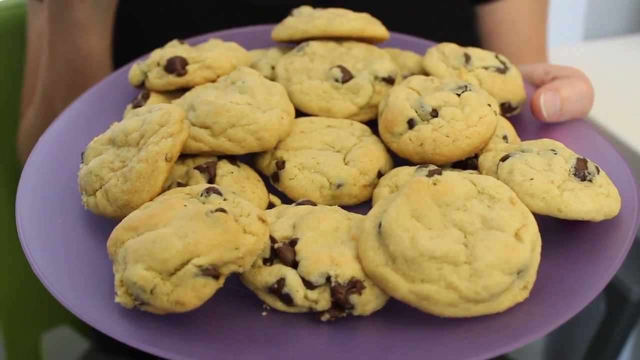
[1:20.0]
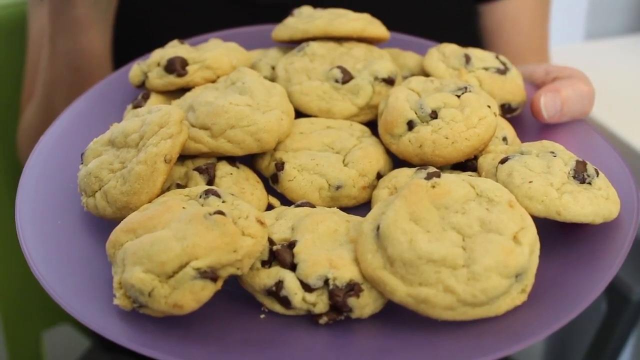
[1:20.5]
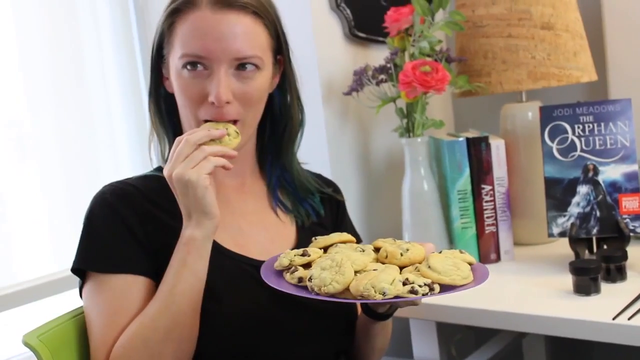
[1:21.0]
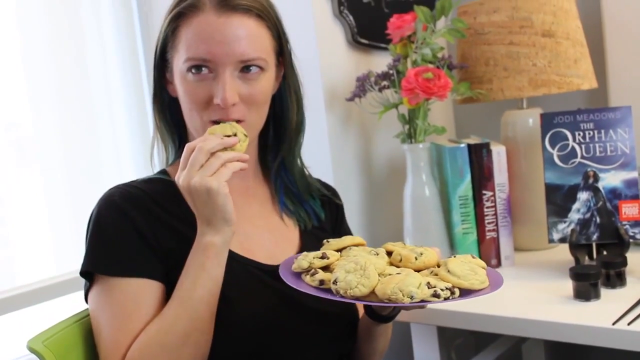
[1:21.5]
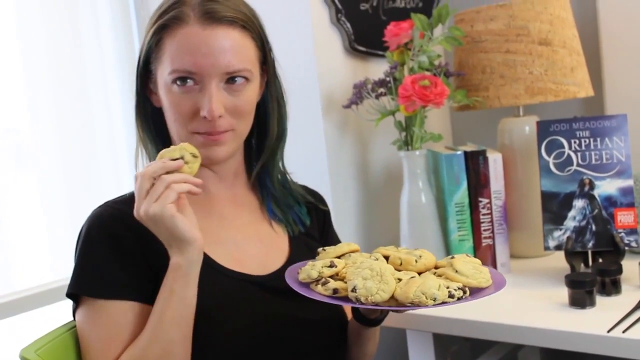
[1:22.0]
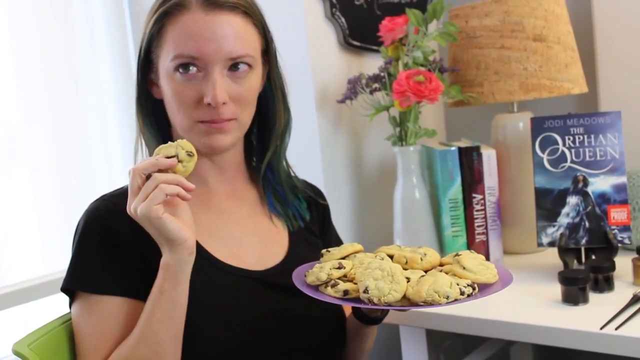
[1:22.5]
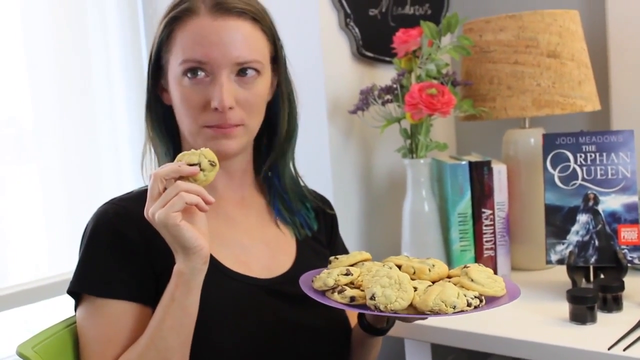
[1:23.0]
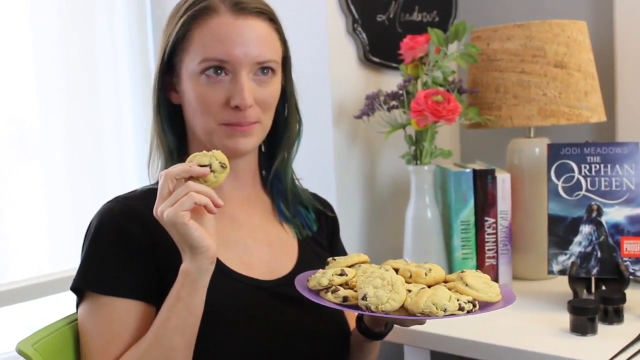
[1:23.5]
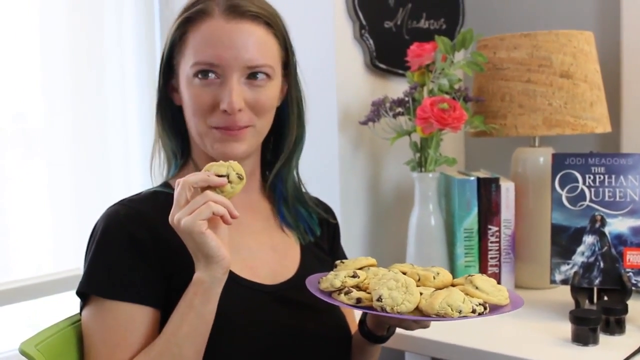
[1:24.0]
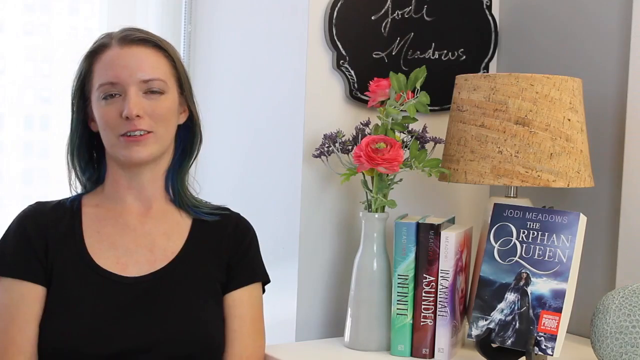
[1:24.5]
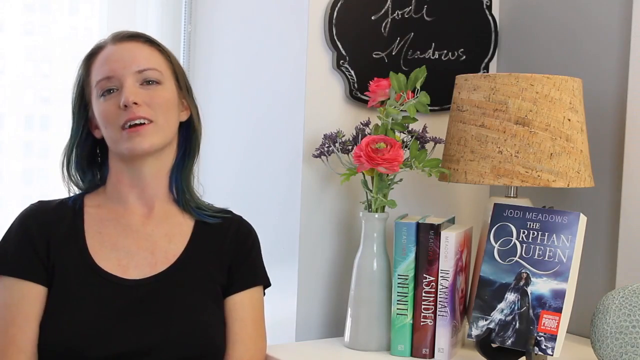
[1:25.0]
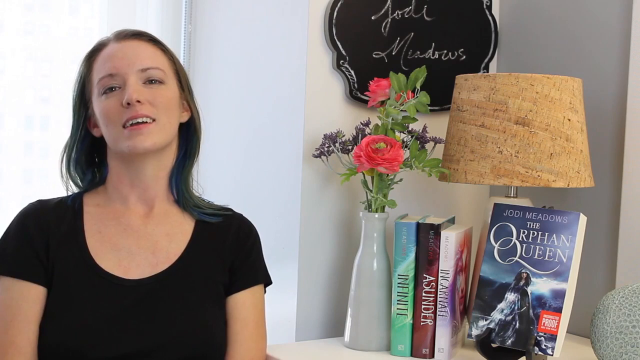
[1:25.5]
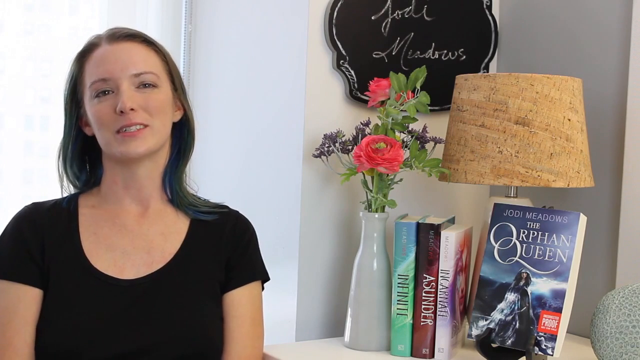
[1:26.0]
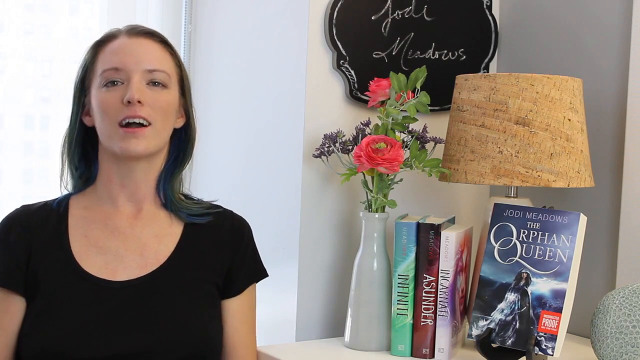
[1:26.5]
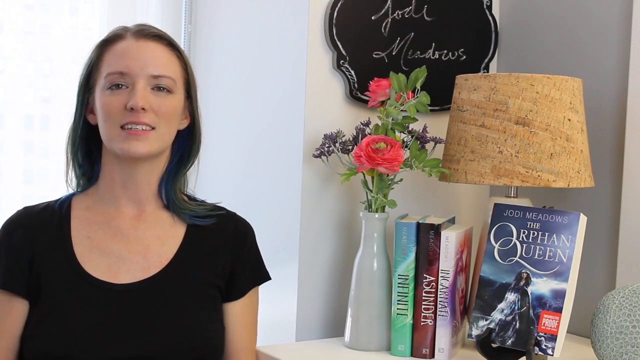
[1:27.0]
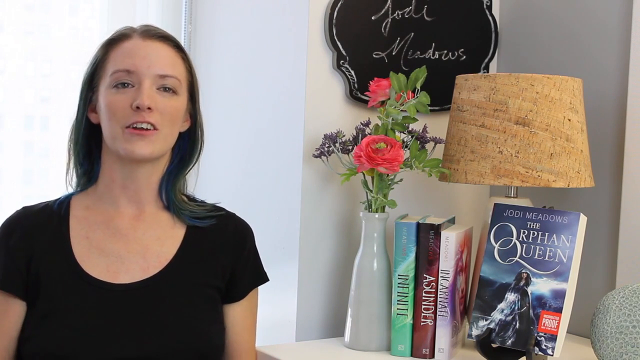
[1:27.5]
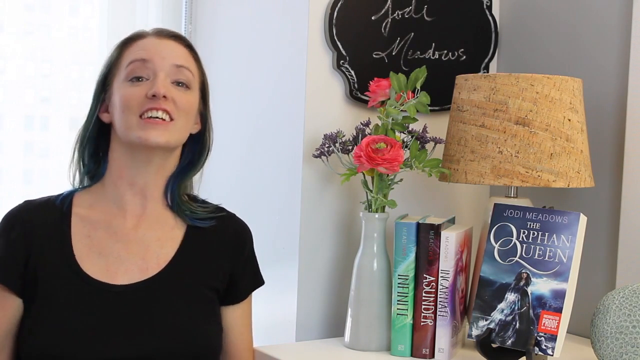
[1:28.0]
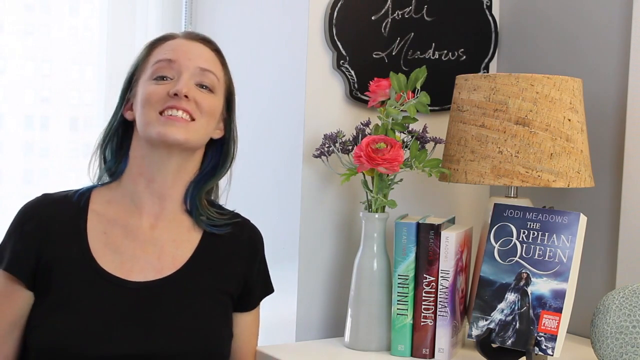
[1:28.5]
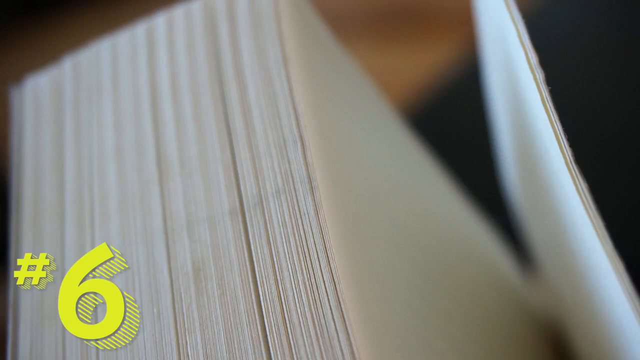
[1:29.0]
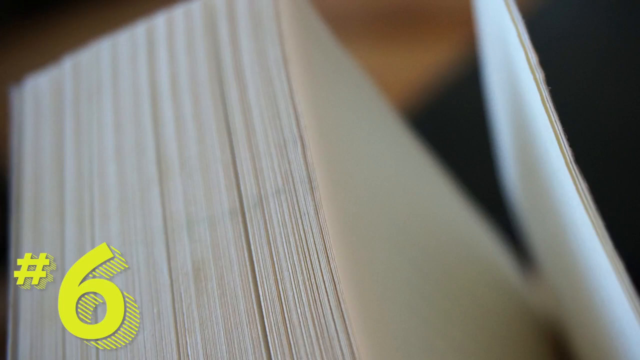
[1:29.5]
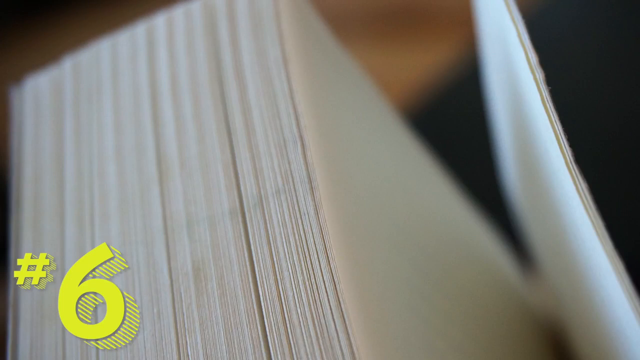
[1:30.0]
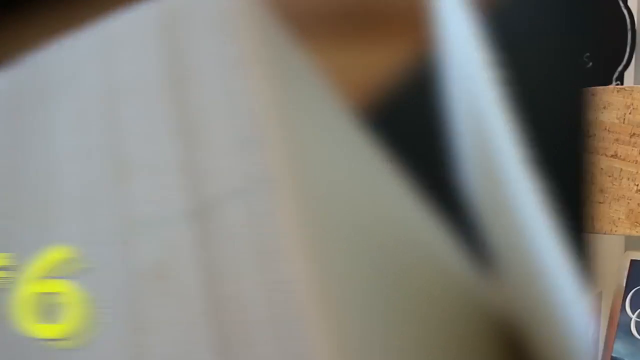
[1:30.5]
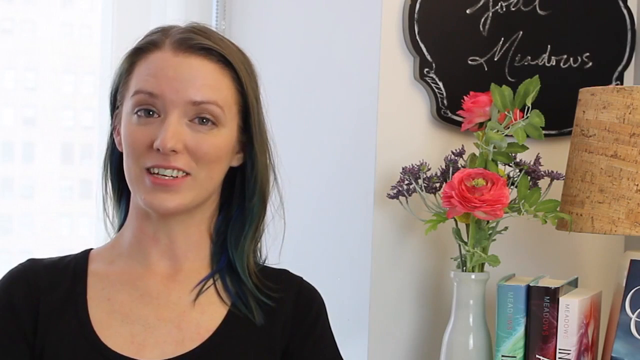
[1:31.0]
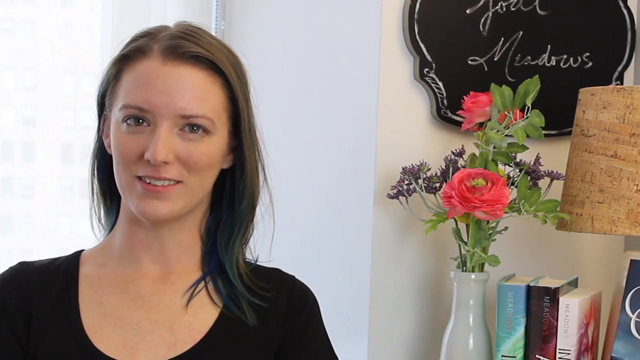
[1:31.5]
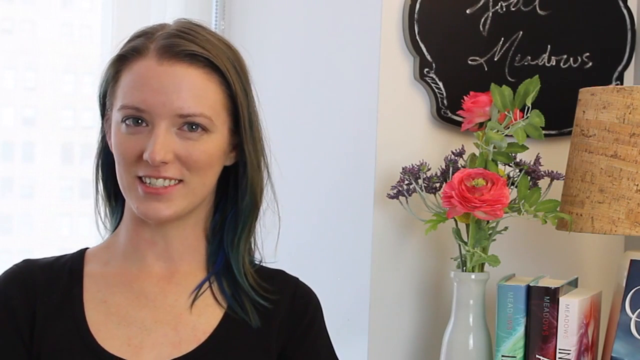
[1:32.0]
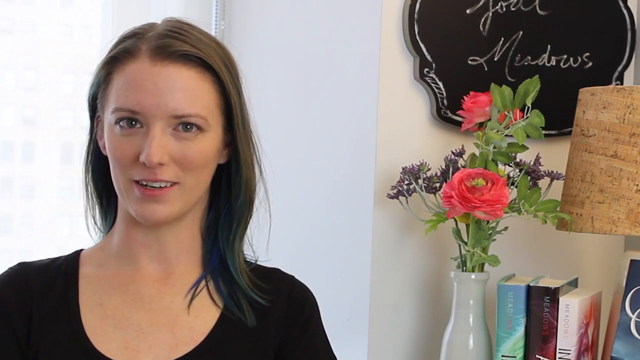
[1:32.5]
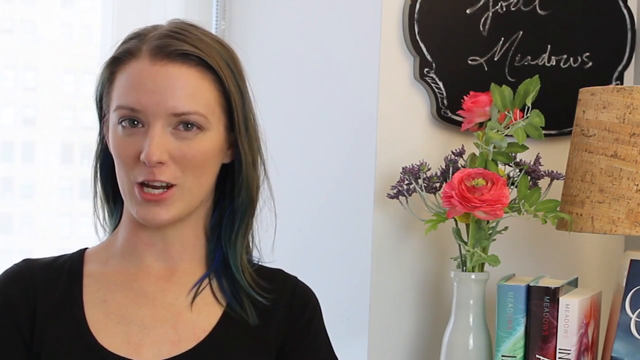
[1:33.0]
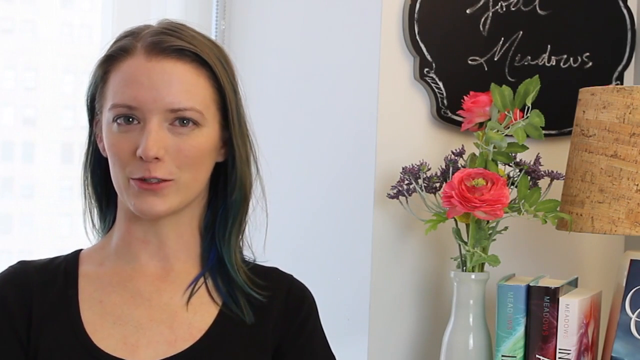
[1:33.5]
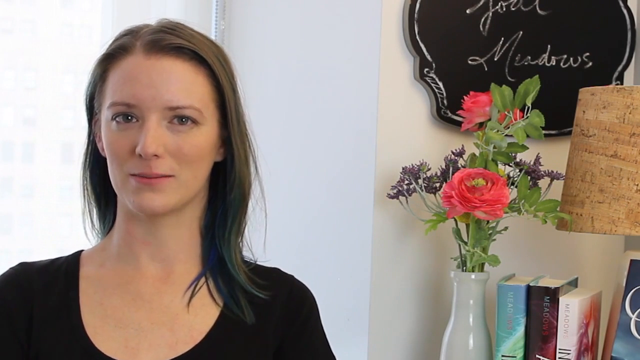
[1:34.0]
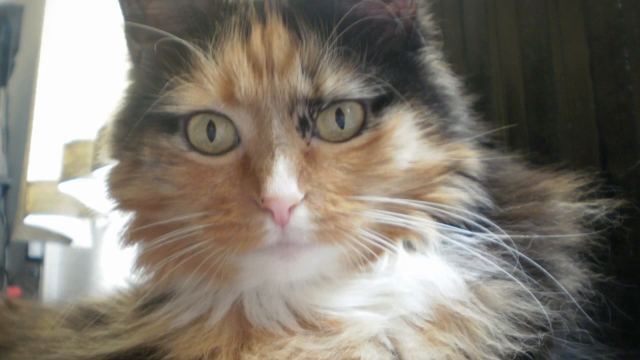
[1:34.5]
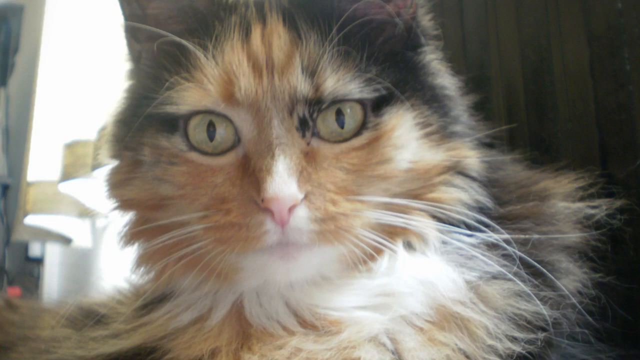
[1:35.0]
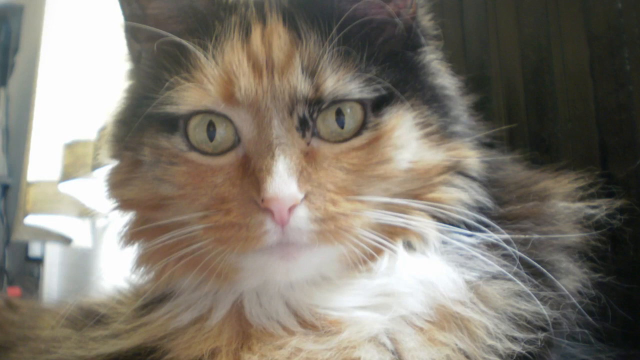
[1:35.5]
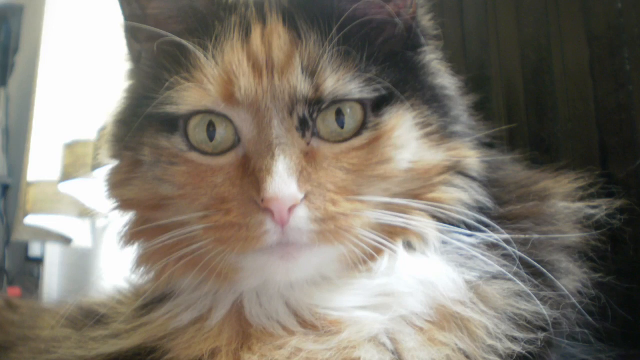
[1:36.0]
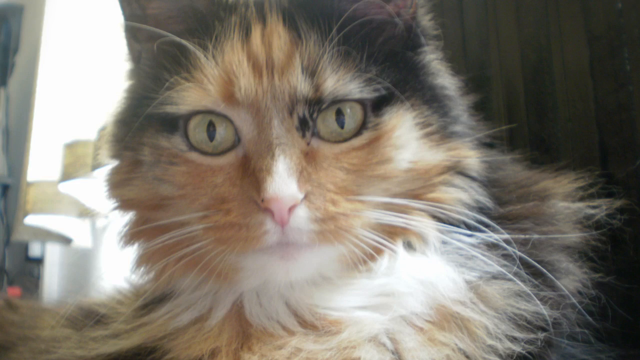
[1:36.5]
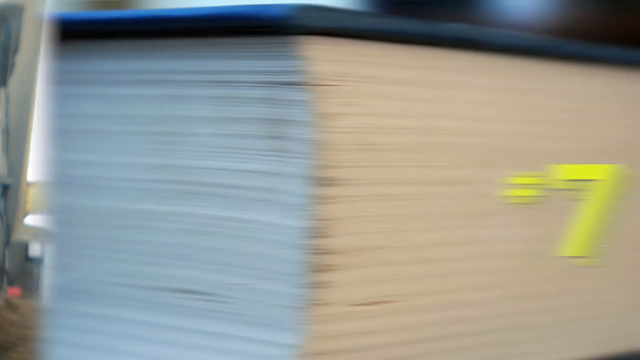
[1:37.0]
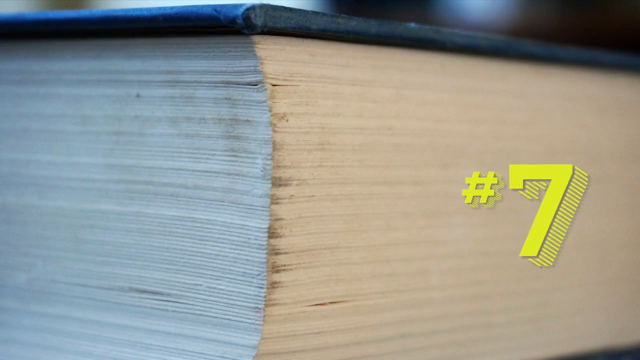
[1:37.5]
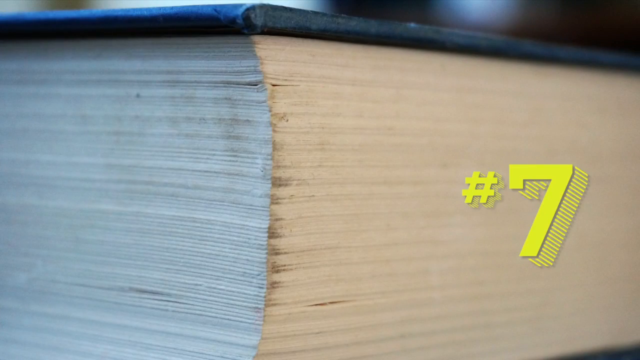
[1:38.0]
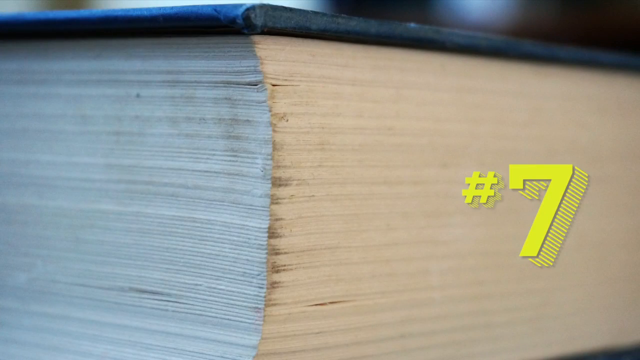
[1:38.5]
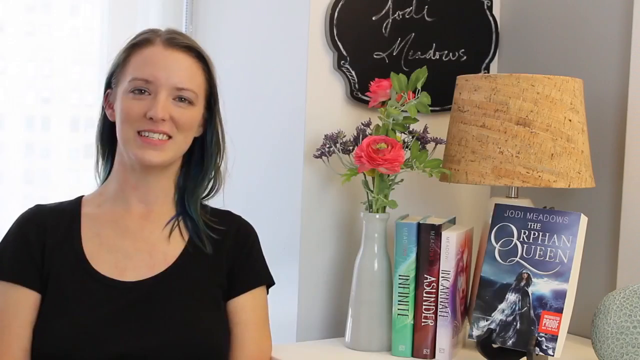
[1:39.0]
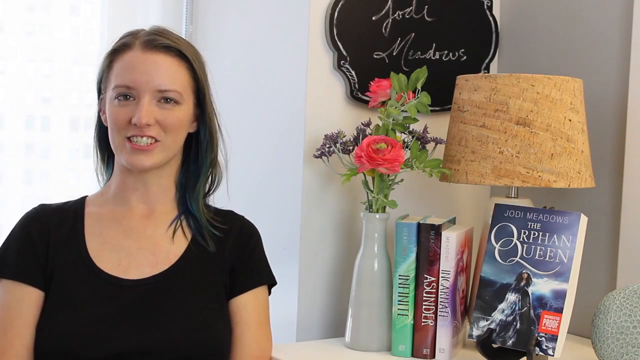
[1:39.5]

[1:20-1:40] A purple plate topped with chocolate chip cookies is held up toward the camera. The shot cuts to a view slightly further away, revealing that a woman is holding the plate. She wears a short-sleeved black shirt and has long hair and brown eyes. She picks up one of the cookies and bites into it. Next to her is a bookshelf with several books, a lamp, and a vase with pink flowers; one book is turned toward the audience, titled The Orphan Queen by Jodi Meadows. A different angle of the woman sitting next to the bookshelf shows a small blackboard hanging on the wall above the shelf, with the name "Jodi Meadows" written on it in white chalk. The video cuts to a still image of the spine of a book with a yellow number six superimposed over it, then back to the woman talking next to the bookshelf. Next is a still image of a brown cat with black stripes, followed by a still image of the side of a book with a yellow number seven superimposed over it. The video cuts back to the woman by the bookshelf, who continues to speak.